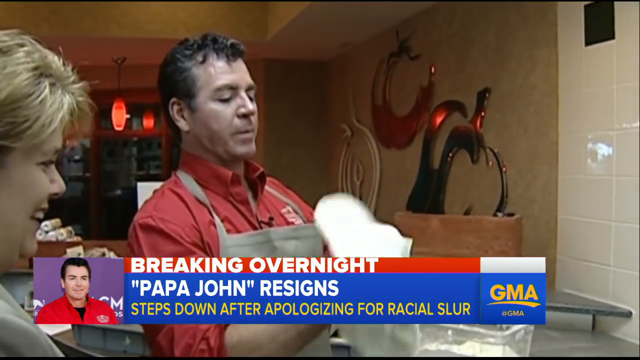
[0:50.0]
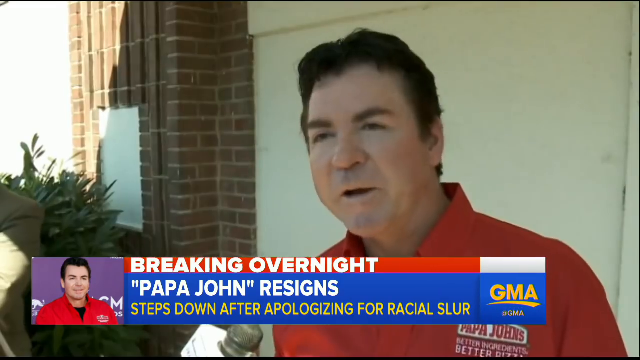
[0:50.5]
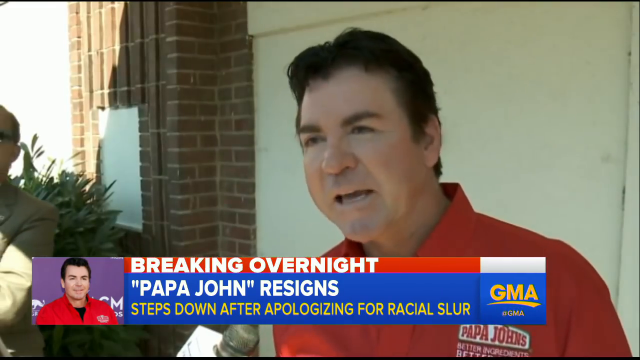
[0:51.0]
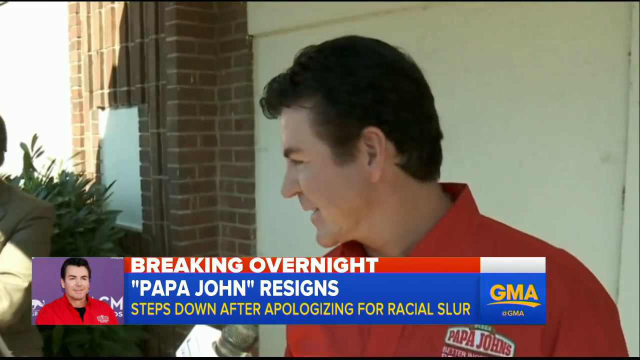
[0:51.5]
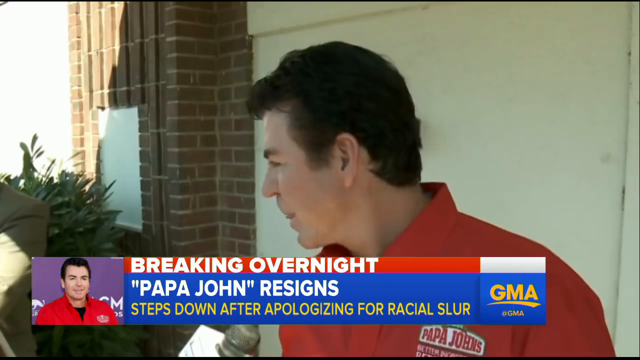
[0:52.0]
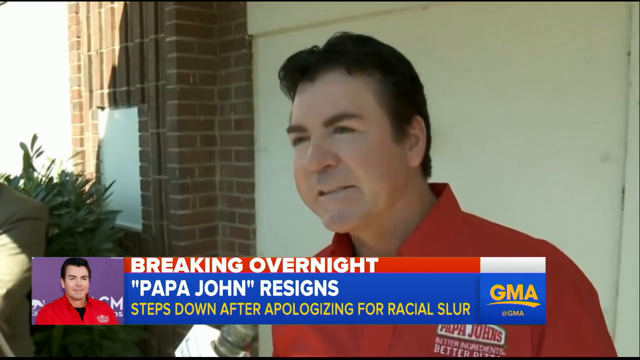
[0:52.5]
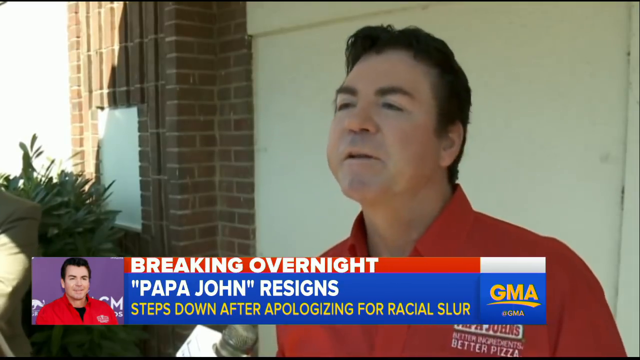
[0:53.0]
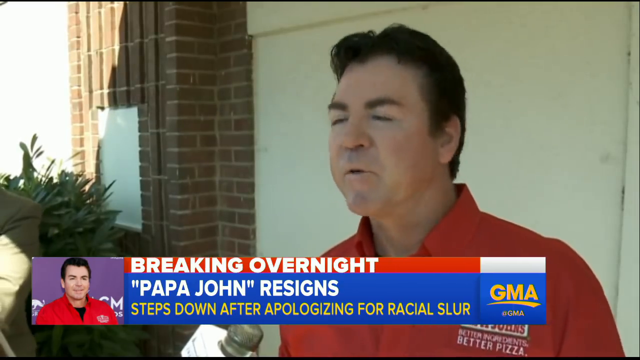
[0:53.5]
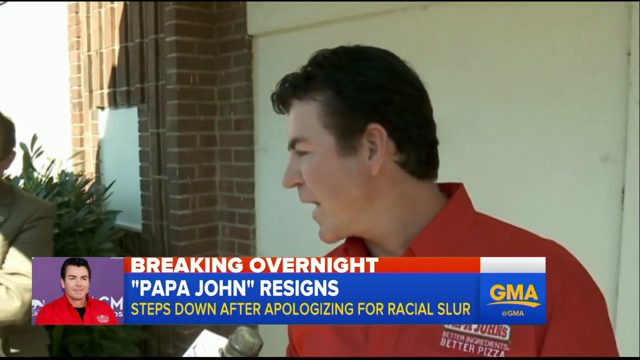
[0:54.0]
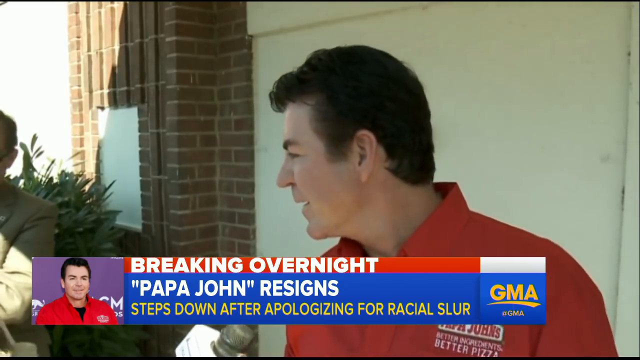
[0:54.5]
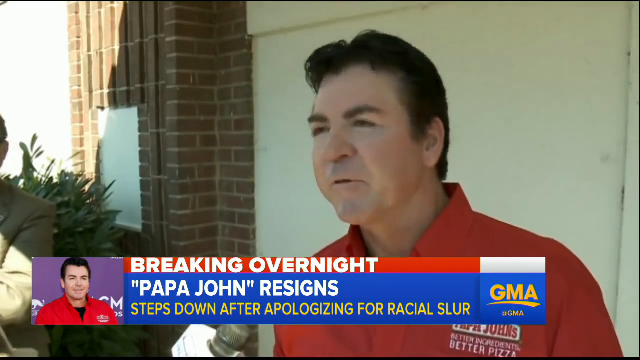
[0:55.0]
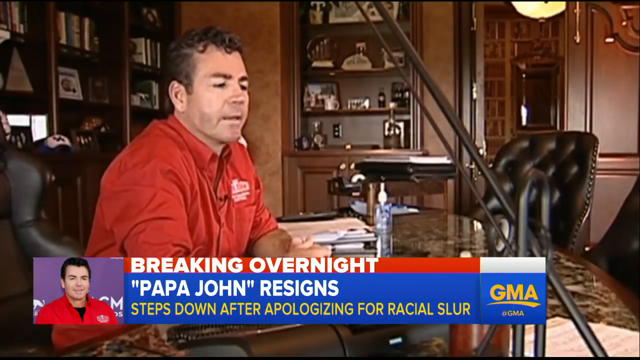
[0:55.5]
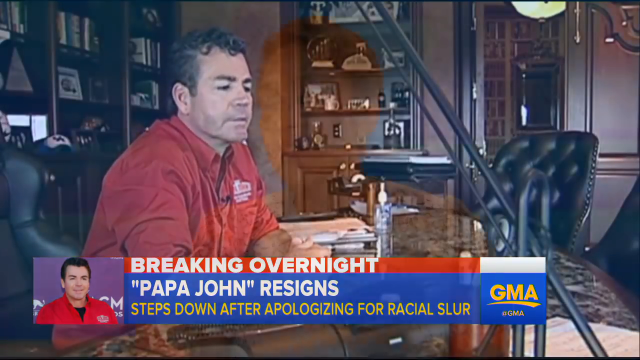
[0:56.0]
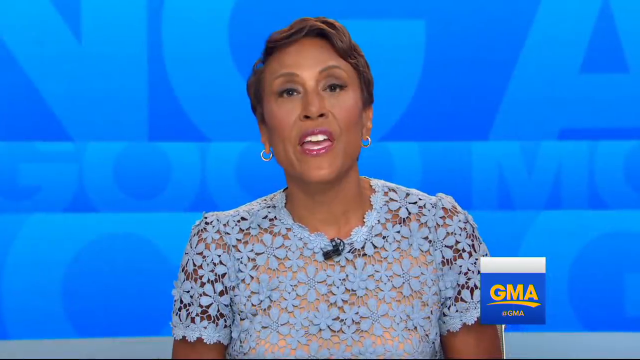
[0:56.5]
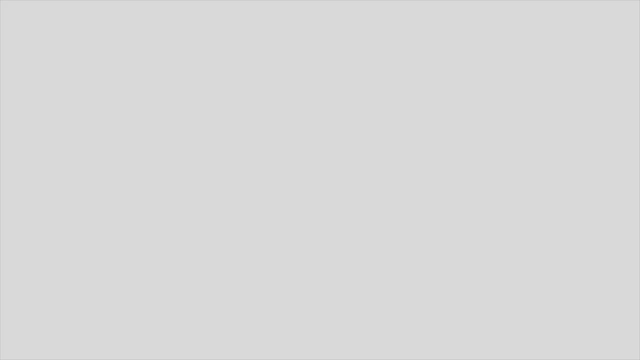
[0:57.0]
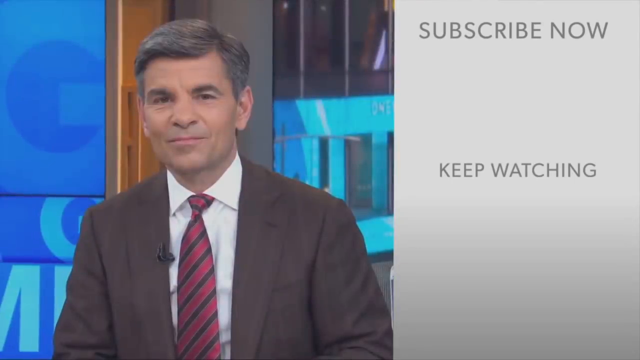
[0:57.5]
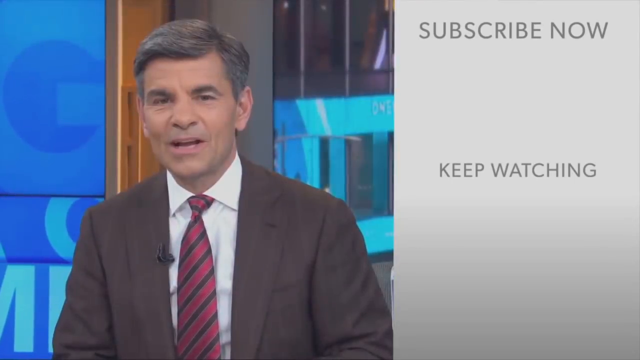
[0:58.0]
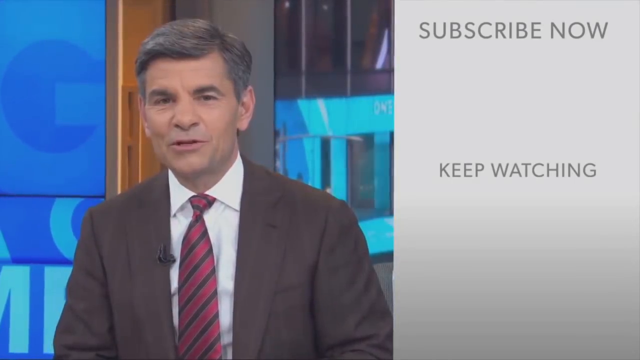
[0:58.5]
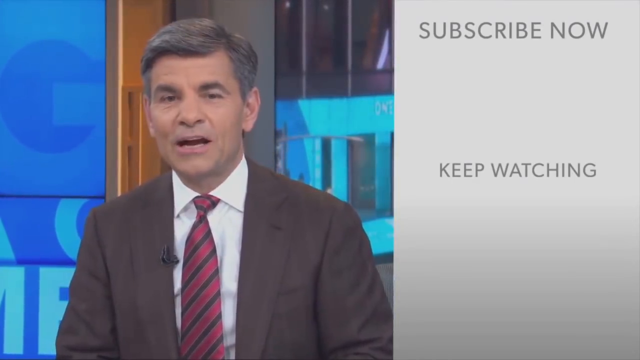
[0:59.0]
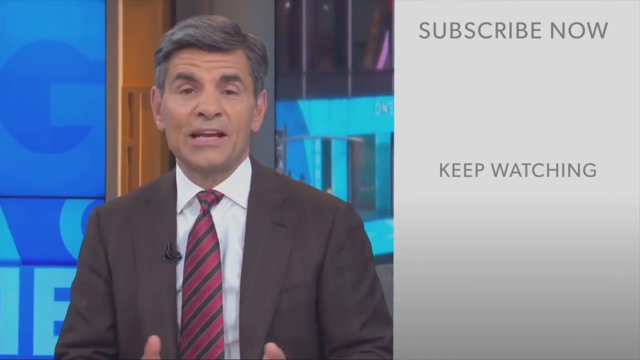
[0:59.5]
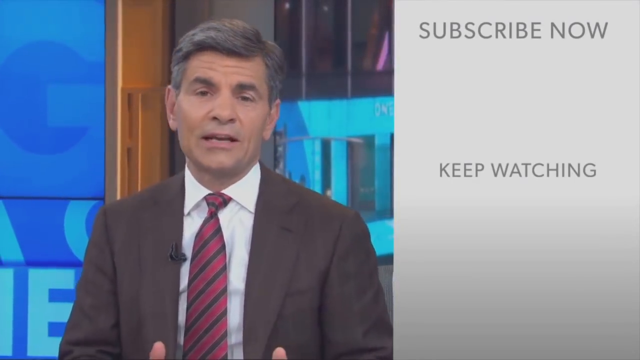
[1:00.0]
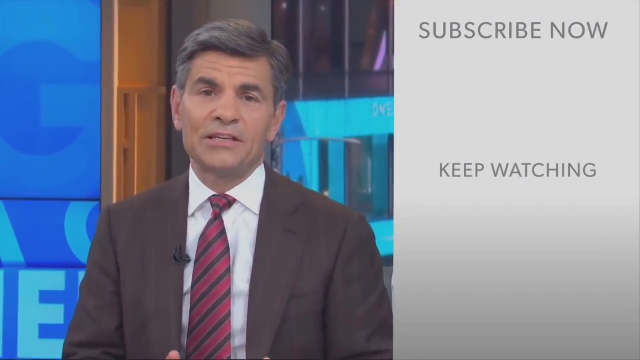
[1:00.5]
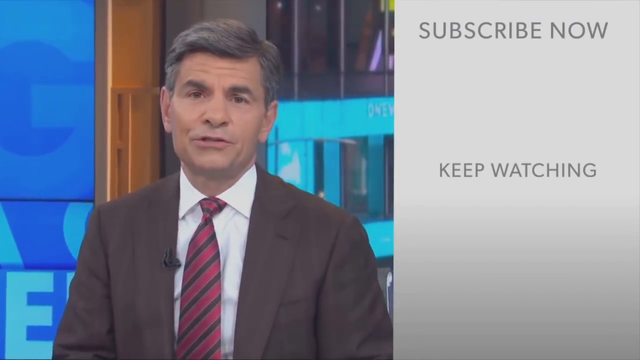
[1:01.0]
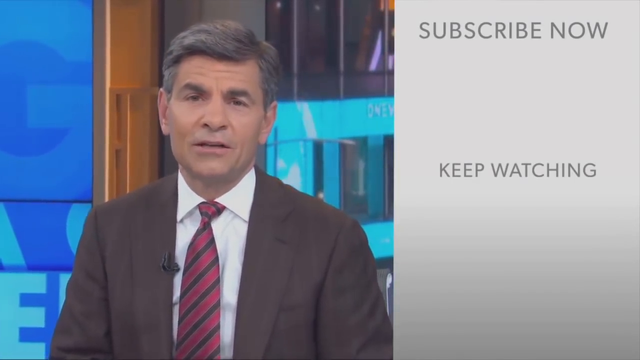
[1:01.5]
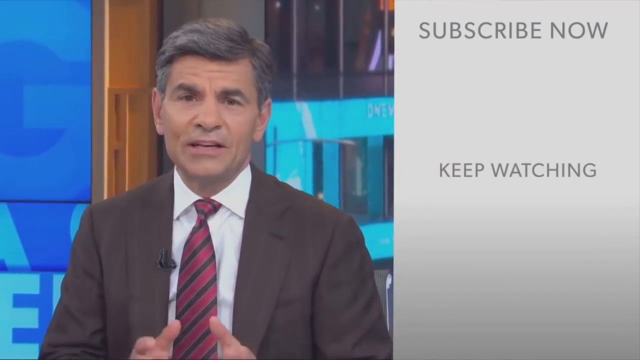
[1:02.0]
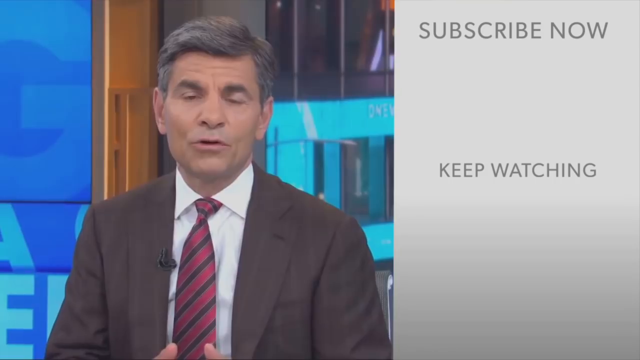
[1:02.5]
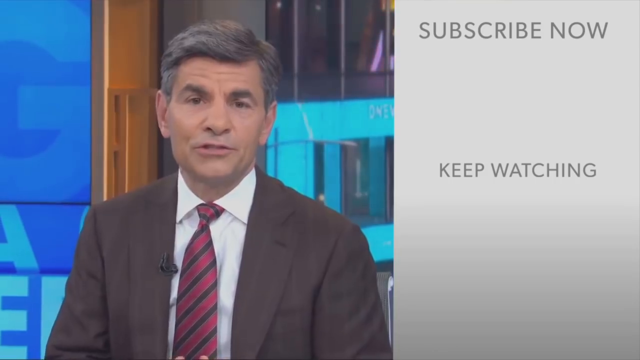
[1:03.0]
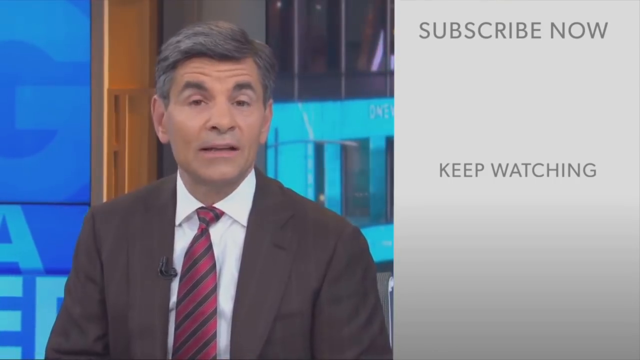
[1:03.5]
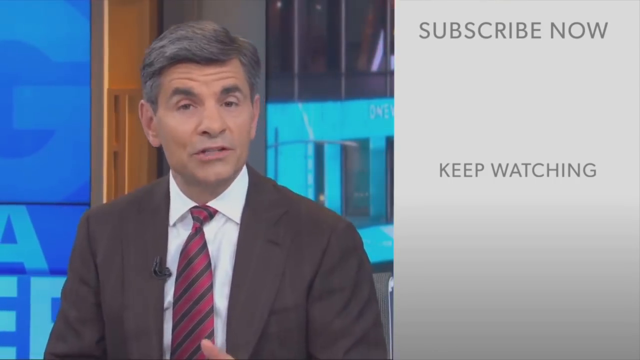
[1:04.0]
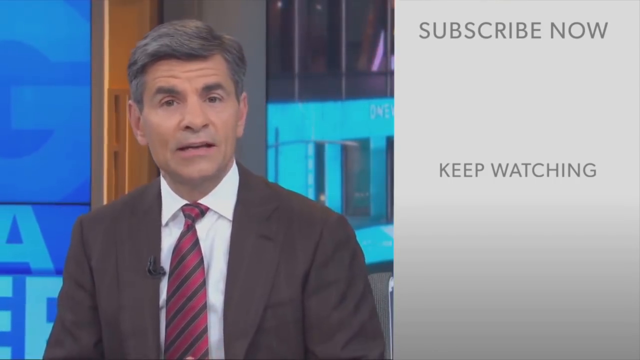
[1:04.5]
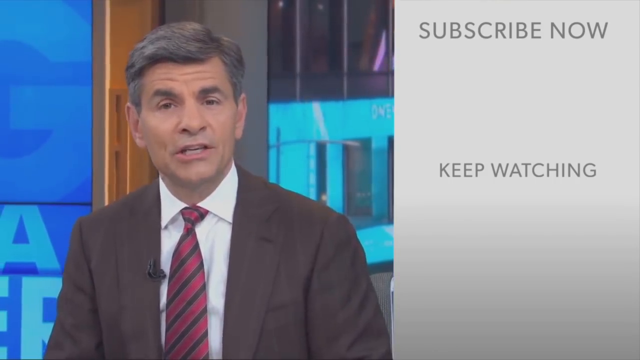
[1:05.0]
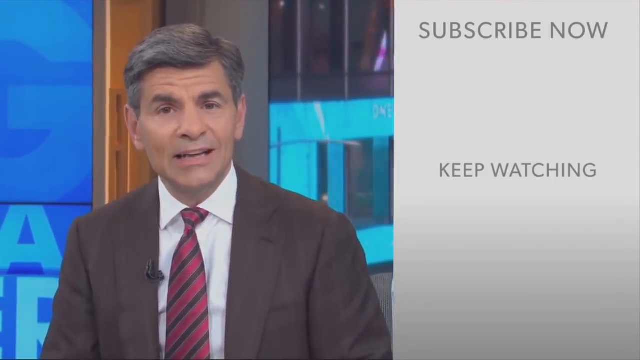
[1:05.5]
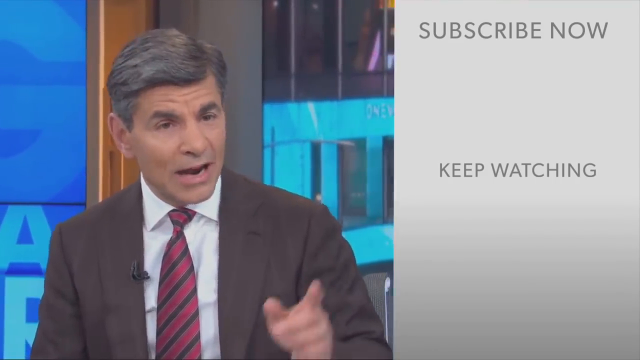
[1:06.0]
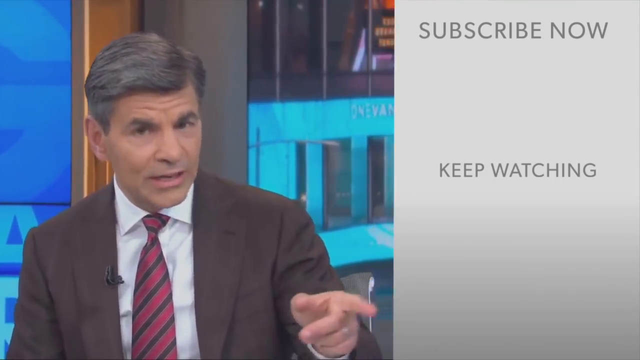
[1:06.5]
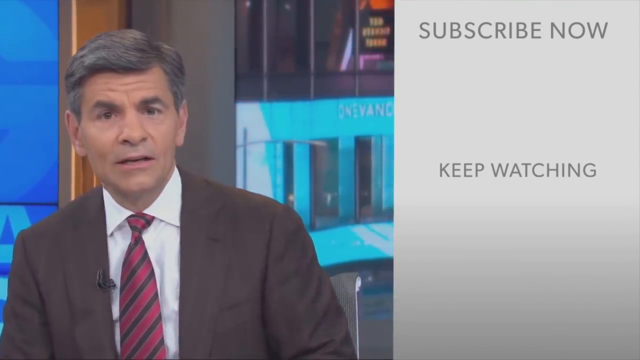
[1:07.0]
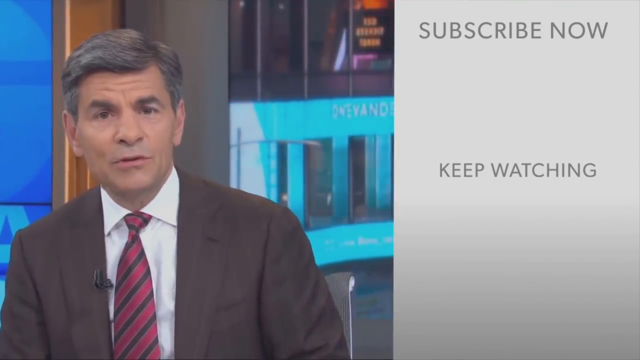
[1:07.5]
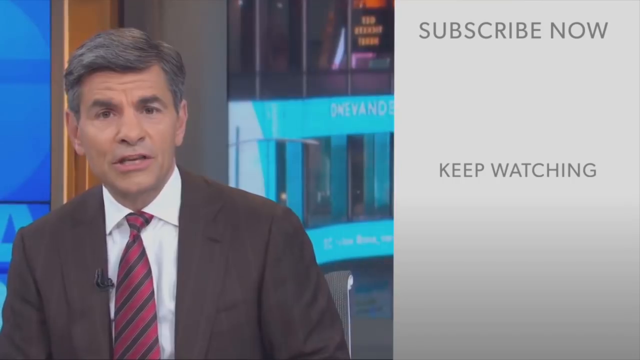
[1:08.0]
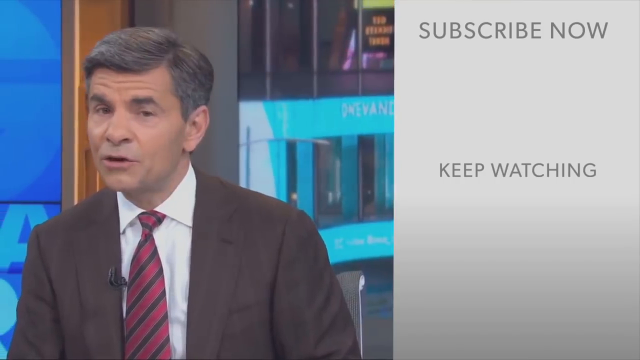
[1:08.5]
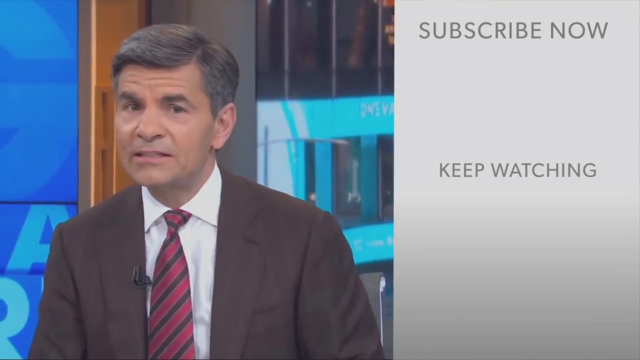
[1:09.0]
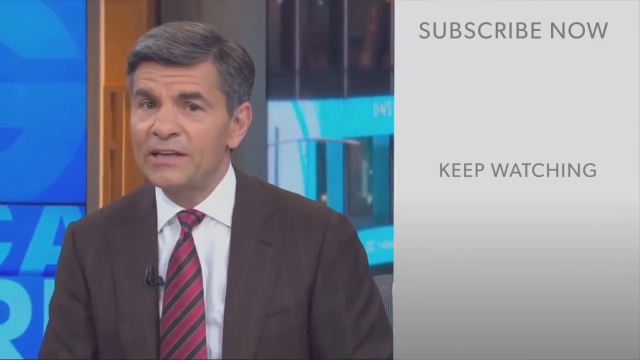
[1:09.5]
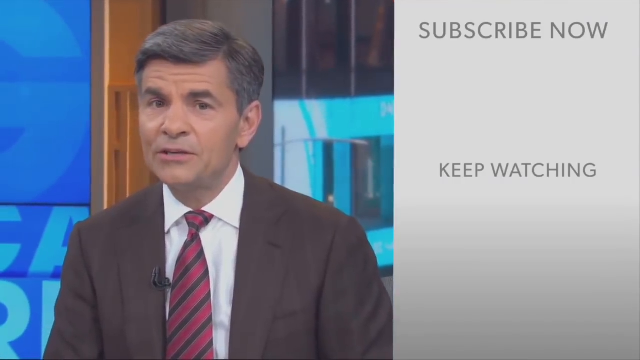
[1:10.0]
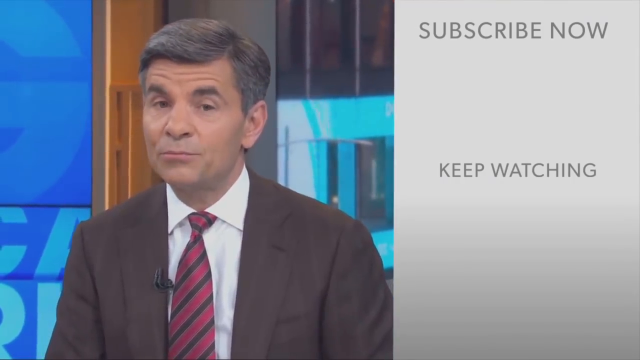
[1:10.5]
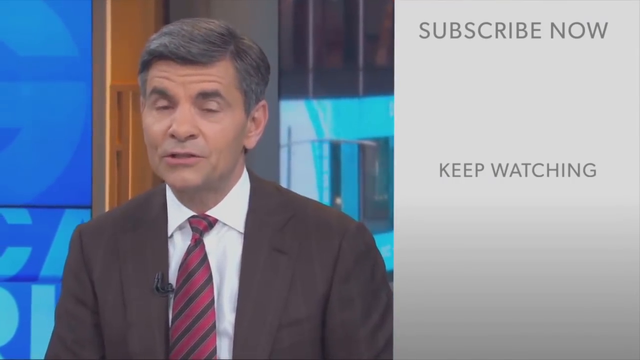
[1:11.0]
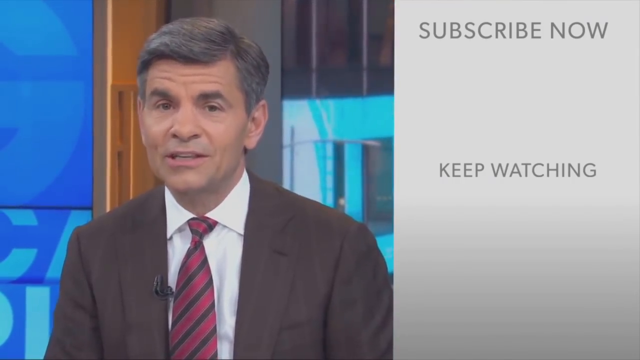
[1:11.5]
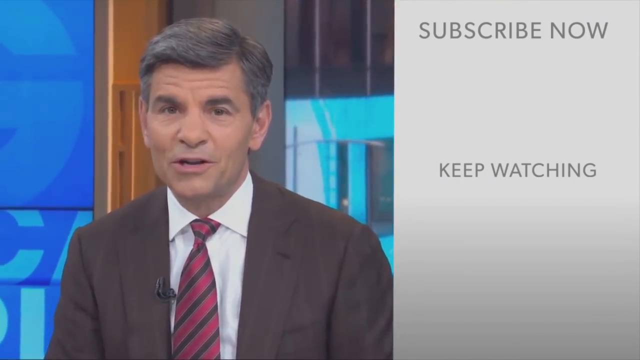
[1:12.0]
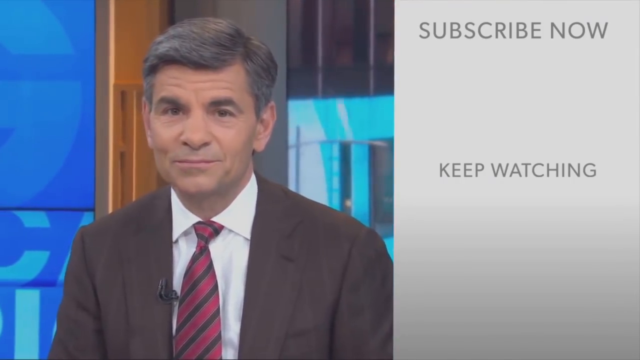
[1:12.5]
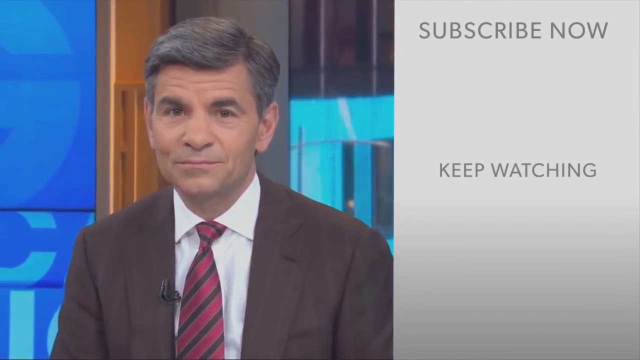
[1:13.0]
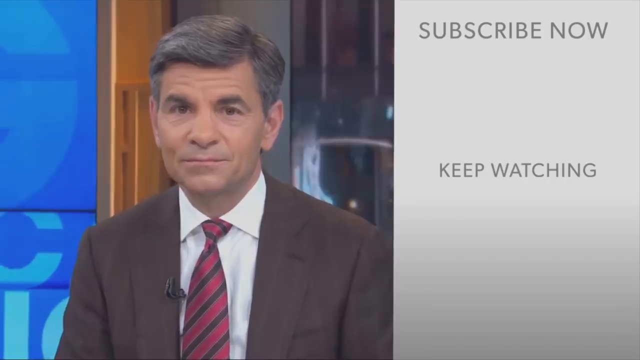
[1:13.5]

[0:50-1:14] The report on Papa John resigning and stepping down after apologizing for a racial slur continues with slides of pictures of him. He stands at the stadium with men behind him. The report mentions inappropriate and hateful language, that he used the N-word on a conference call, and that racism has no place in our society. A flag is also shown. A woman smiles while interviewing him, and a news broadcaster is seen interviewing him outside. At the end of the broadcast, a man with gray hair and a brown jacket appears alongside a prompt to subscribe and follow the channel for more news.